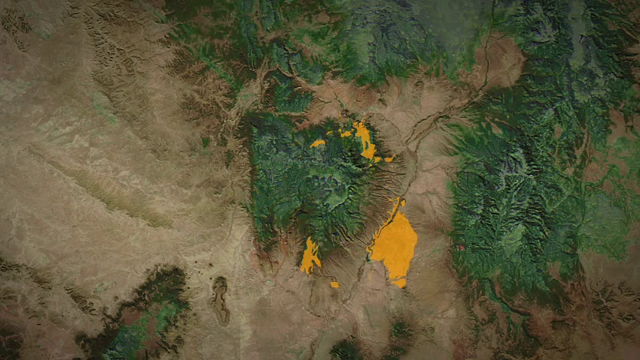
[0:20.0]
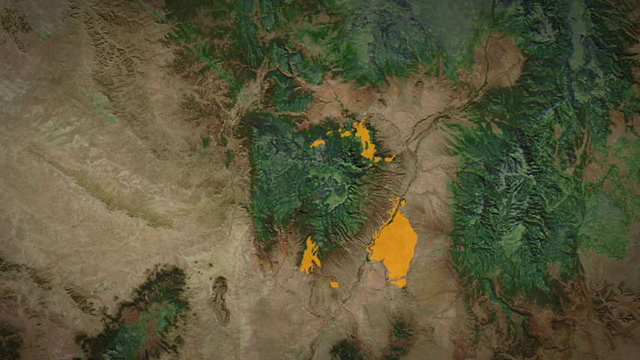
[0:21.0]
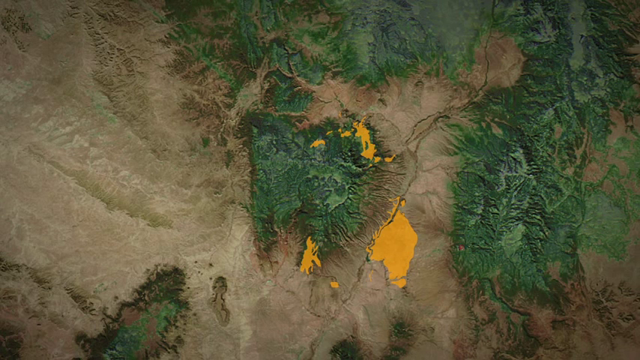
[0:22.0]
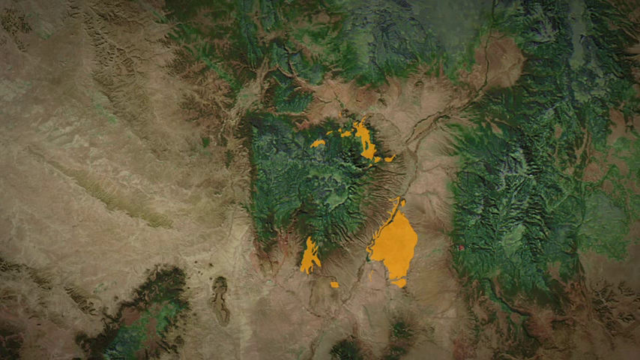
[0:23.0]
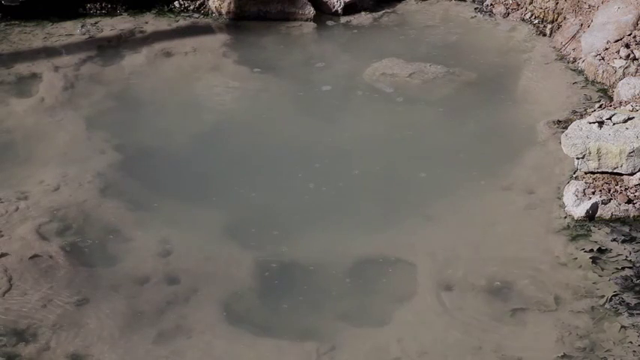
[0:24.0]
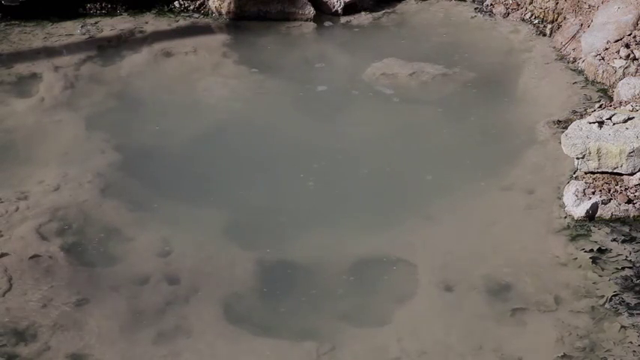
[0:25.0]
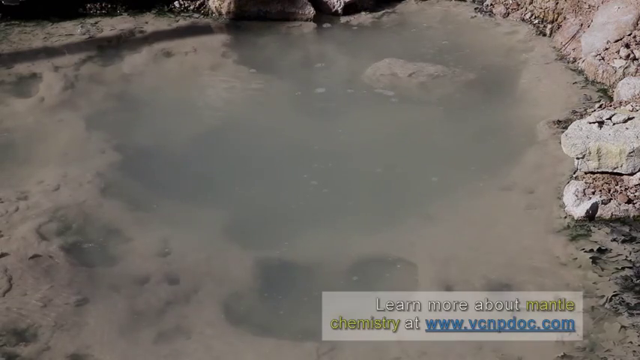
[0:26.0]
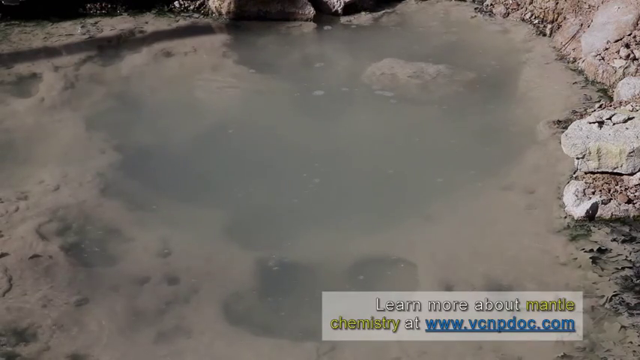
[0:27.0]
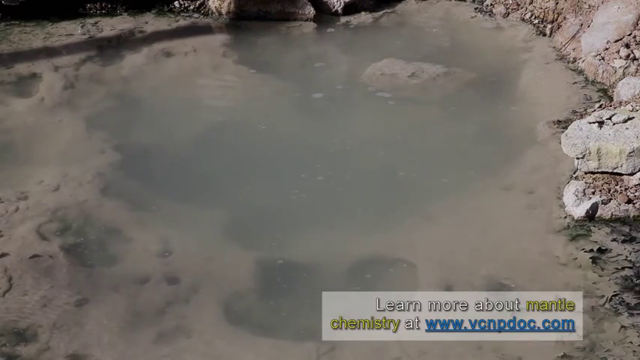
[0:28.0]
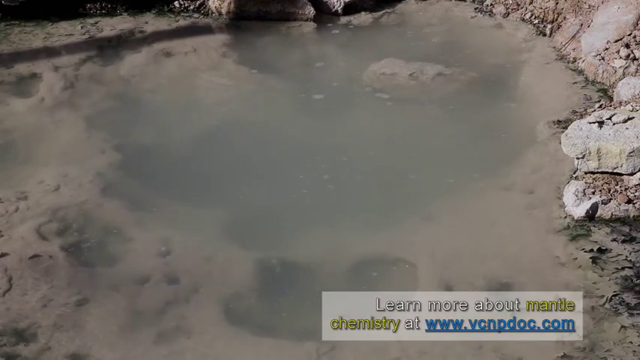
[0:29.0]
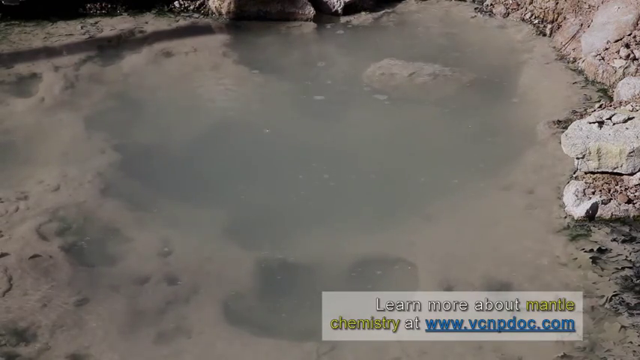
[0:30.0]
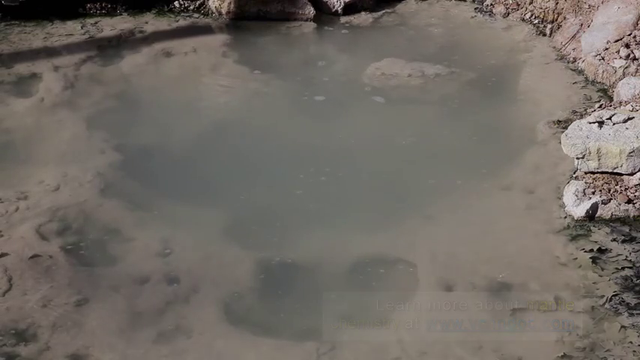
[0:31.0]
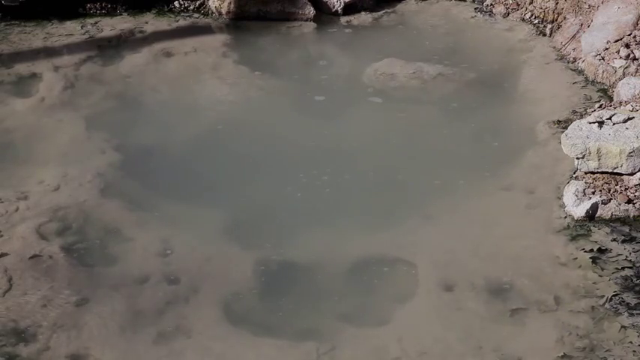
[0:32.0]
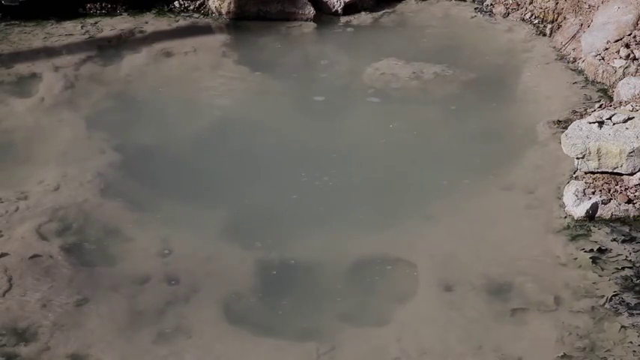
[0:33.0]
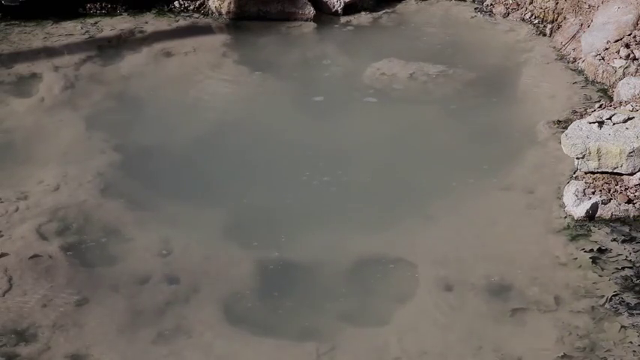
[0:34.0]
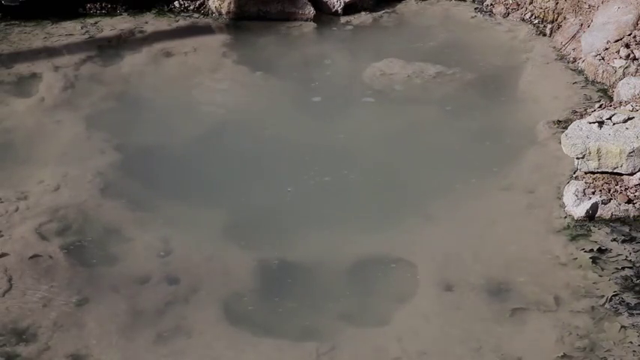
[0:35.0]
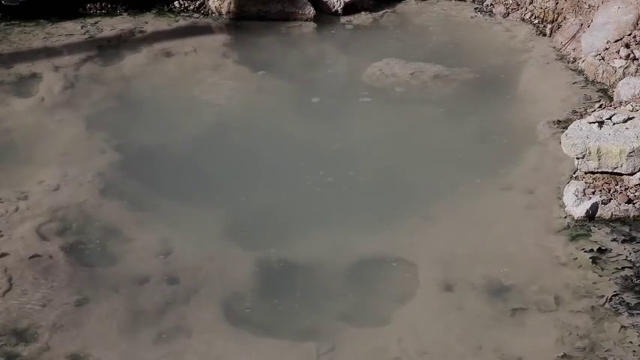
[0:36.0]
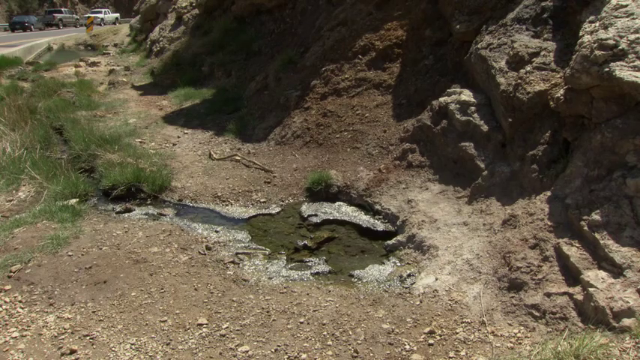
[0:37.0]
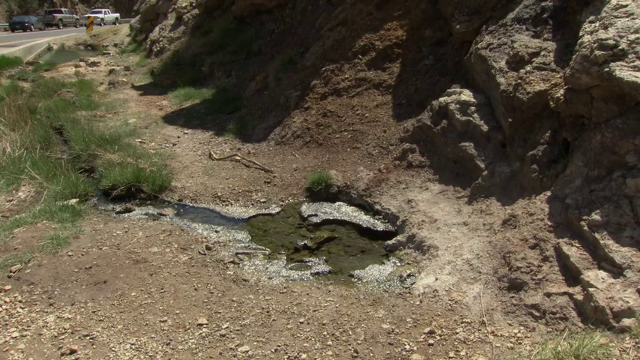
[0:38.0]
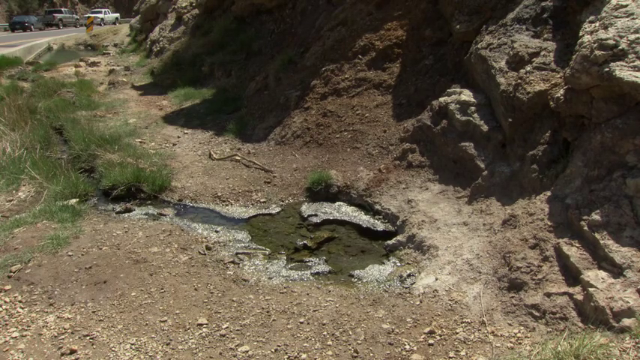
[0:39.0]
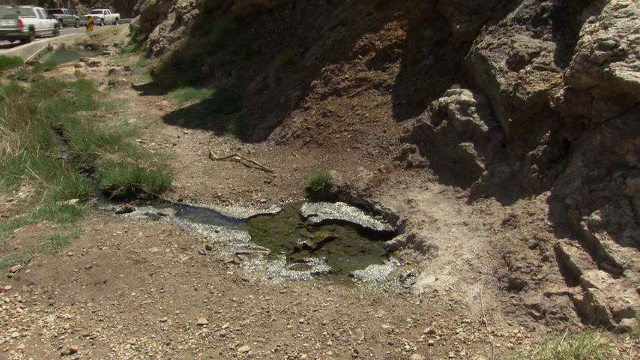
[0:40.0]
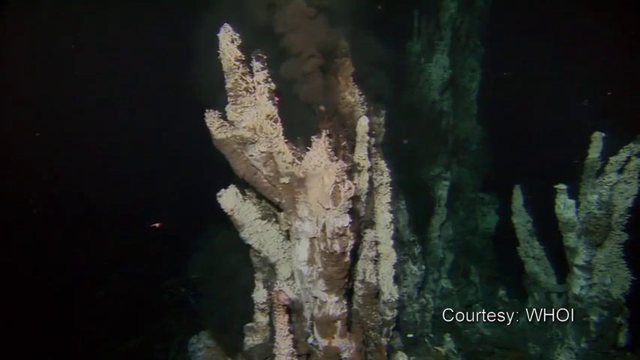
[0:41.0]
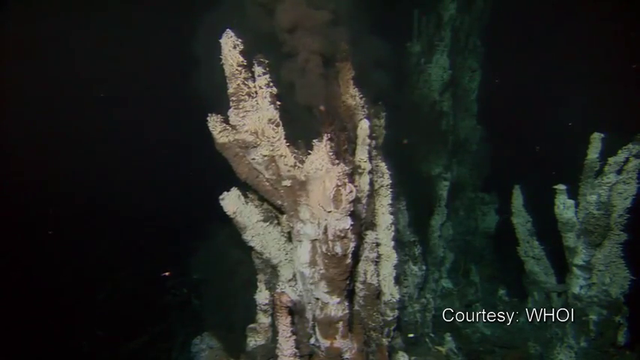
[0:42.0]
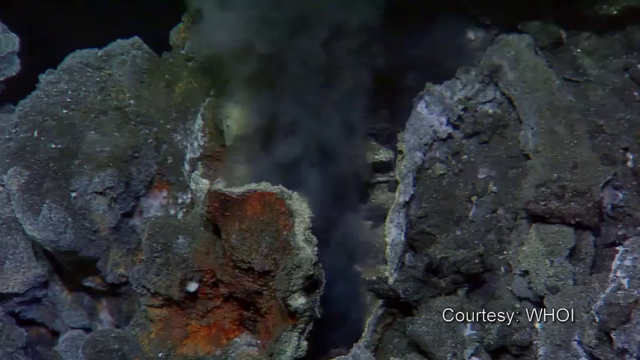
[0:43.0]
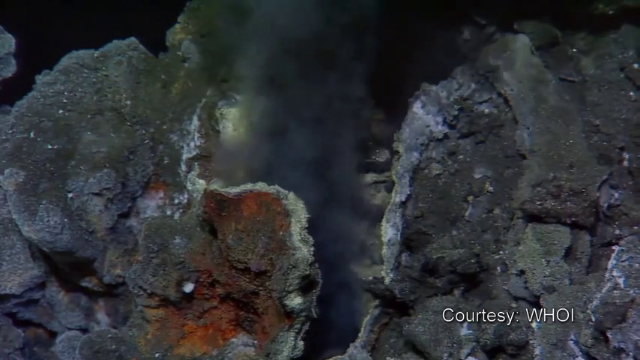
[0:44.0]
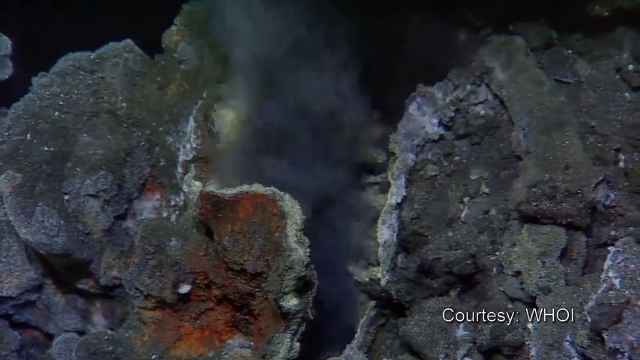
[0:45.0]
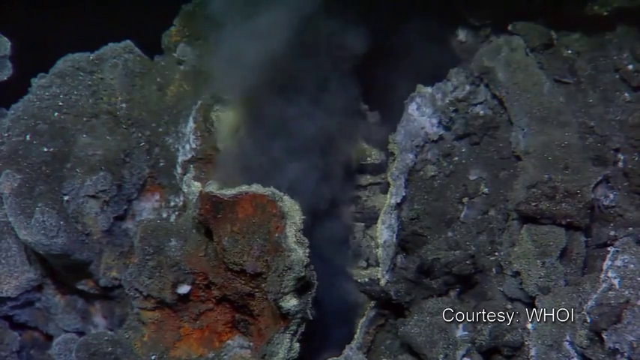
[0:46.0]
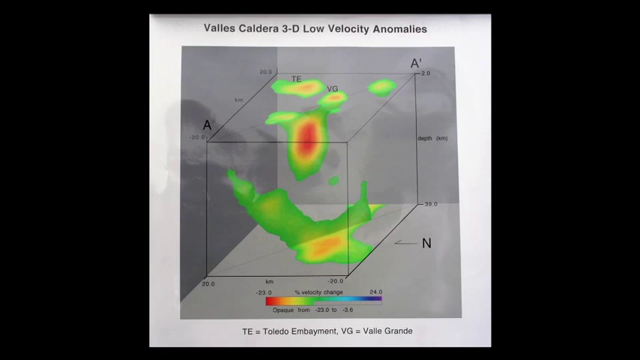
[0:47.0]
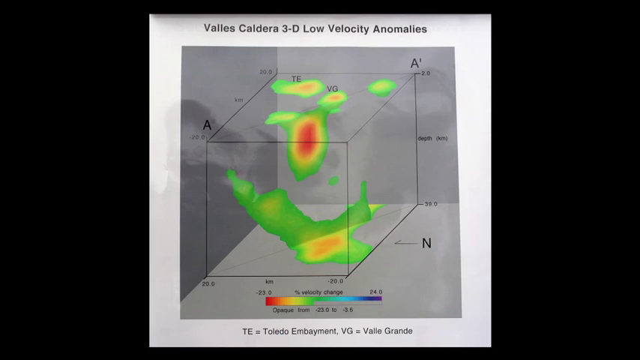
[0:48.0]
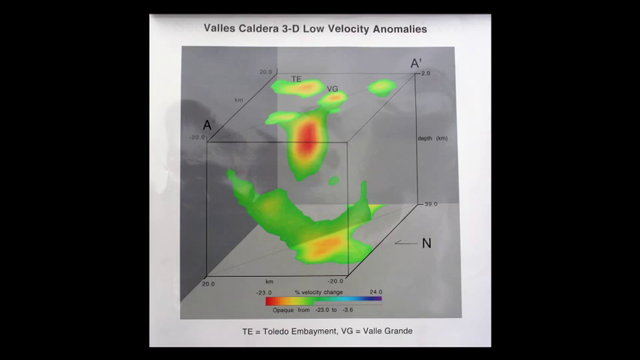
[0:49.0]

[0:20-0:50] The 3D map shows the land below as the camera shows the top side of the mountains, with green, brown and orange areas as part of the map and the camera above it. It cuts to the rocky area, where a body of water is steaming and boiling, followed by different shots of these areas, including a car driving across the street way. Then comes an underwater shot where bubbles come up from the bottom and what looks like a strong current of dirt comes out of a rocky area underwater; the water and pressure coming out of the rocks looks dark gray. Text in the bottom right reads "courtesy of WHO". It then cuts to a diagram that says "3D low velocity".